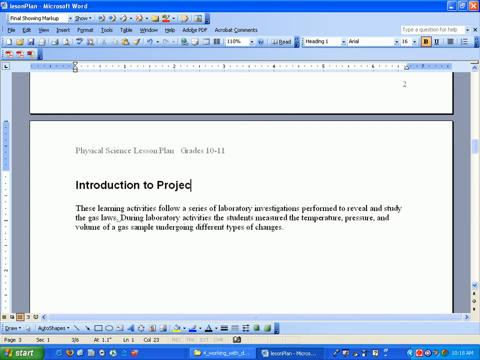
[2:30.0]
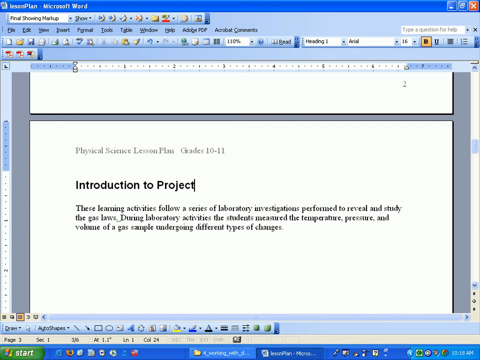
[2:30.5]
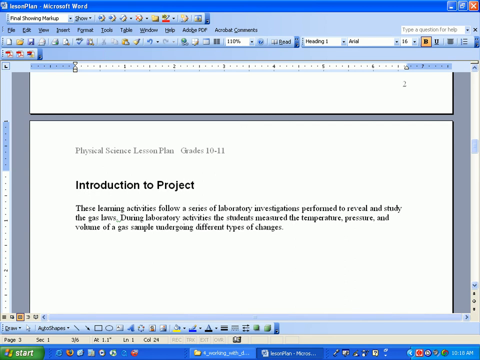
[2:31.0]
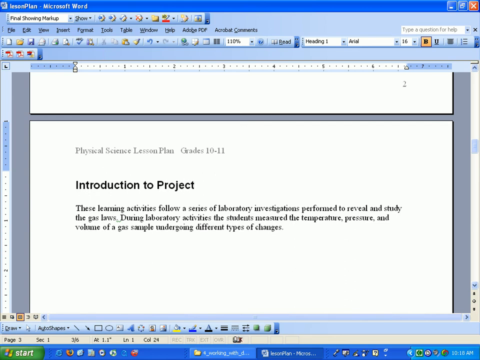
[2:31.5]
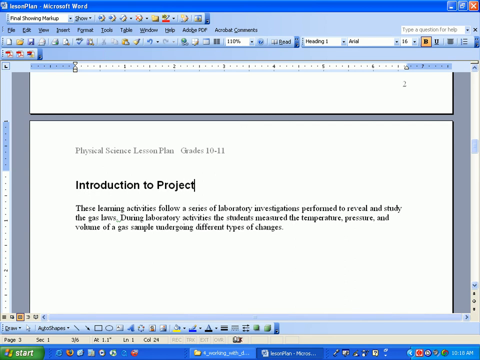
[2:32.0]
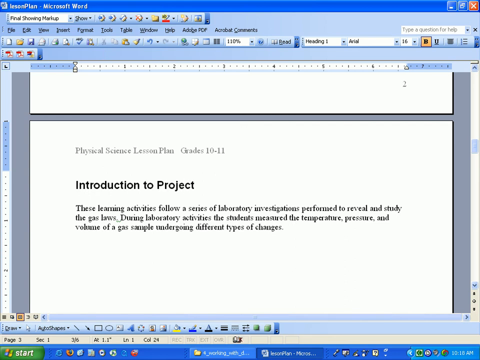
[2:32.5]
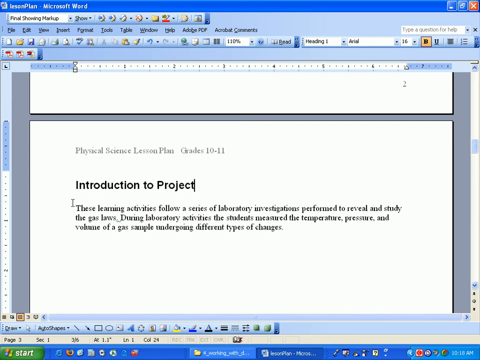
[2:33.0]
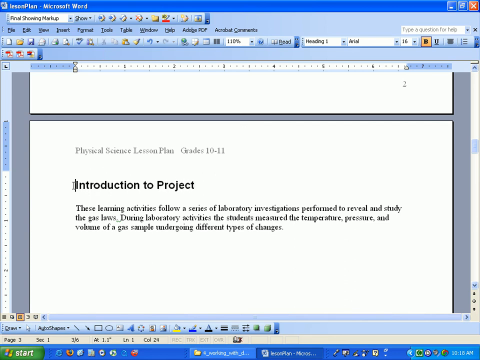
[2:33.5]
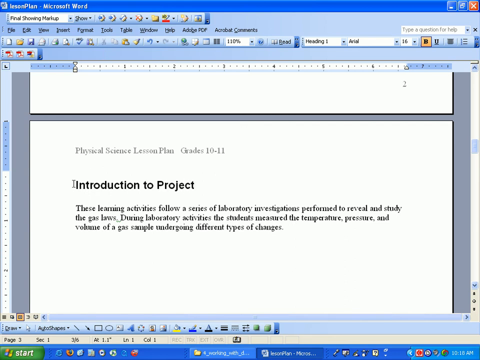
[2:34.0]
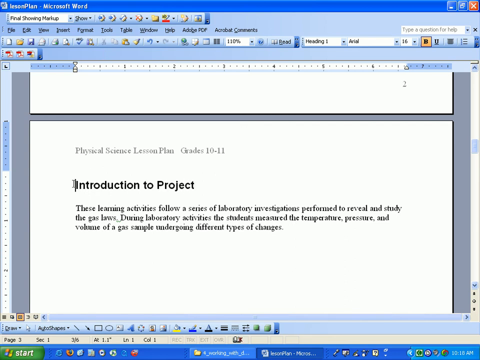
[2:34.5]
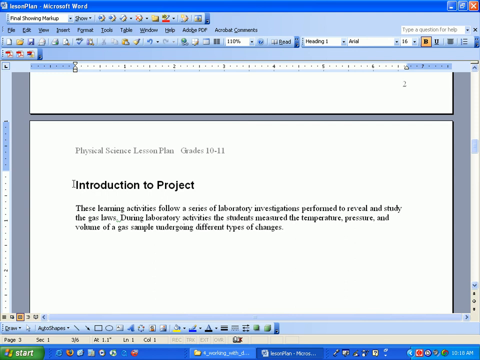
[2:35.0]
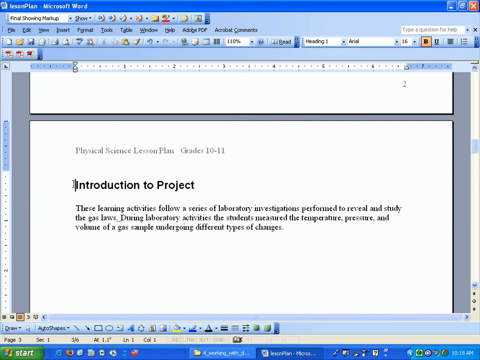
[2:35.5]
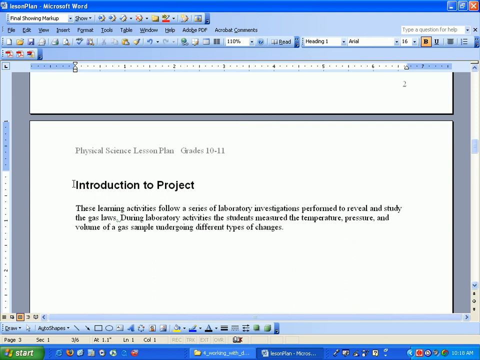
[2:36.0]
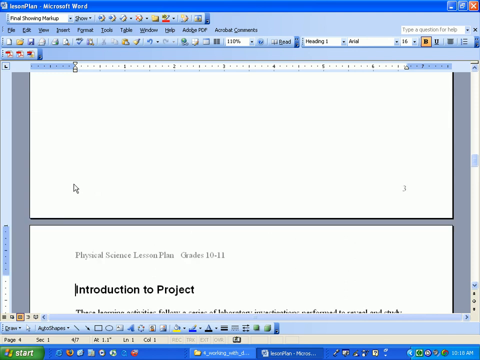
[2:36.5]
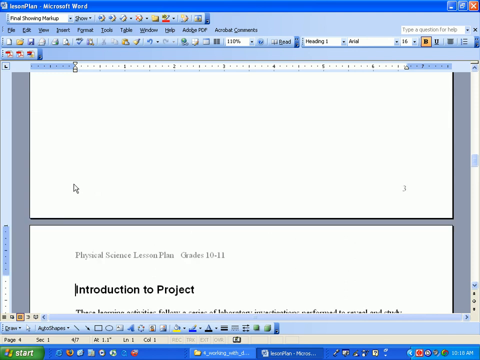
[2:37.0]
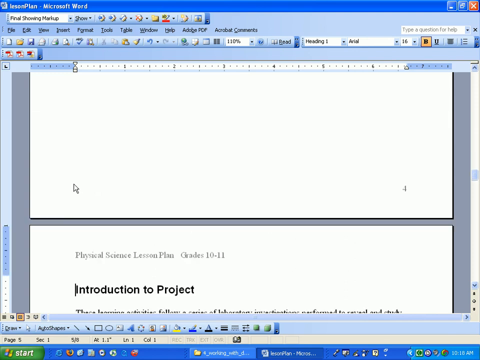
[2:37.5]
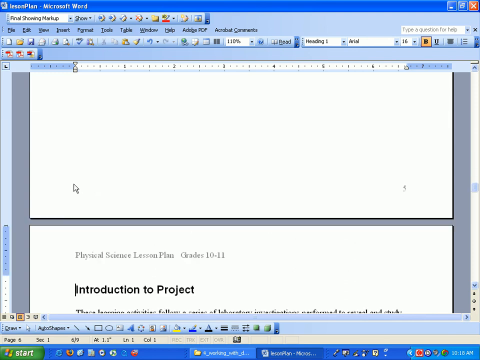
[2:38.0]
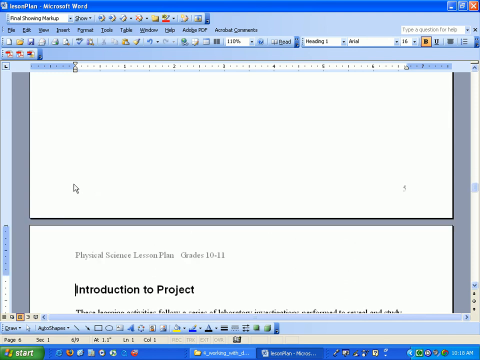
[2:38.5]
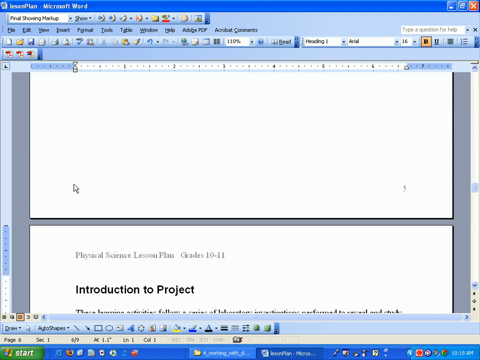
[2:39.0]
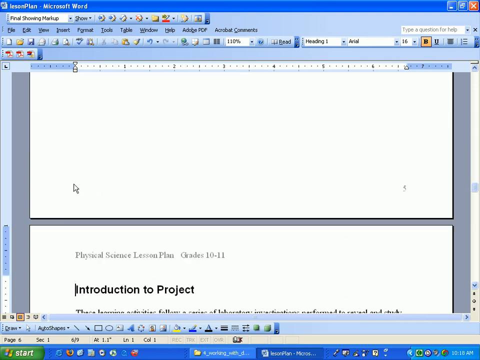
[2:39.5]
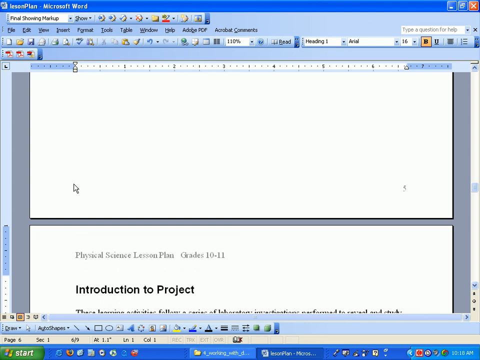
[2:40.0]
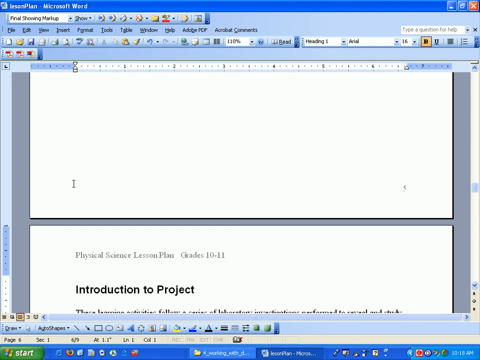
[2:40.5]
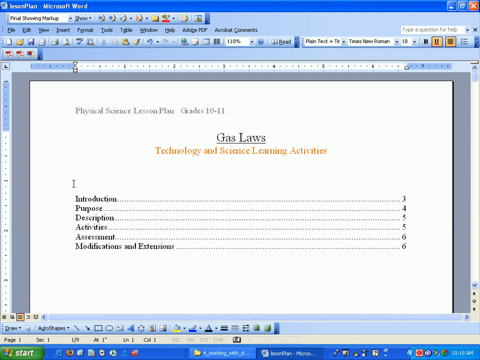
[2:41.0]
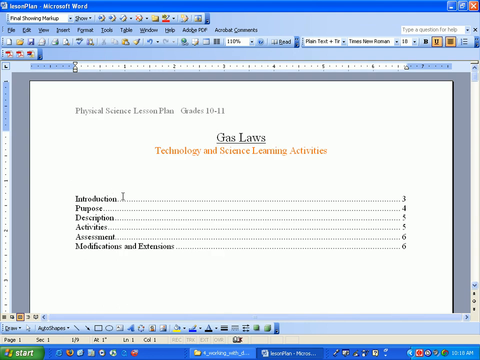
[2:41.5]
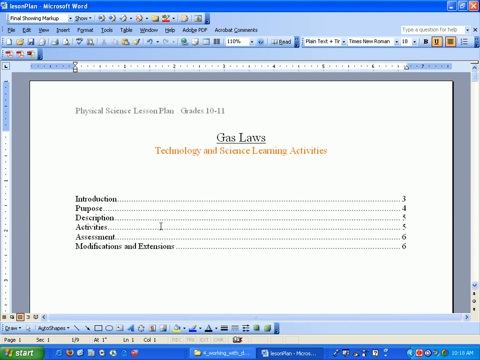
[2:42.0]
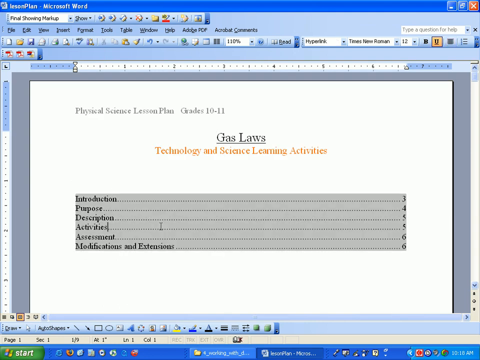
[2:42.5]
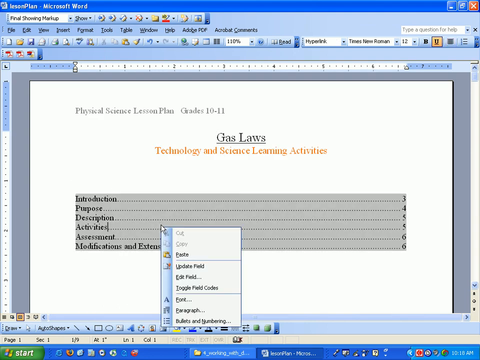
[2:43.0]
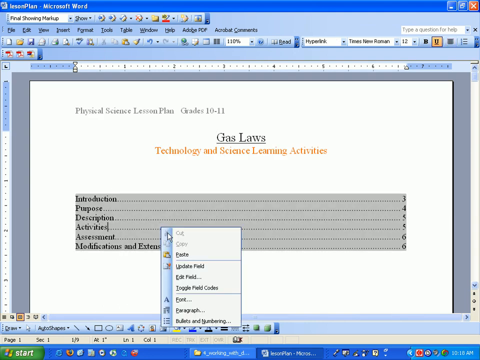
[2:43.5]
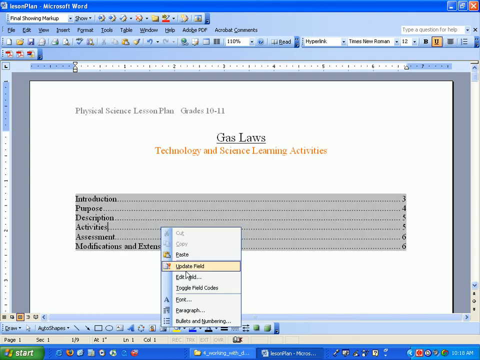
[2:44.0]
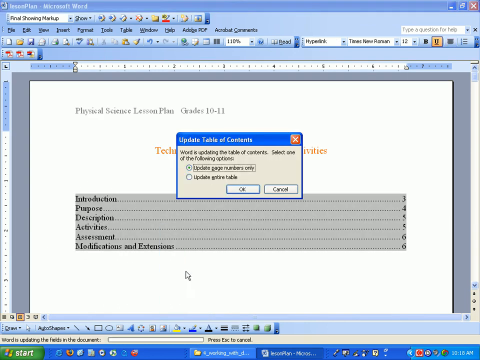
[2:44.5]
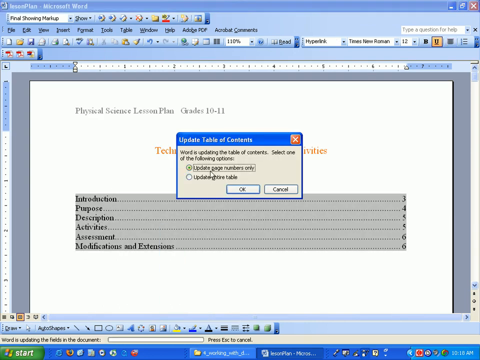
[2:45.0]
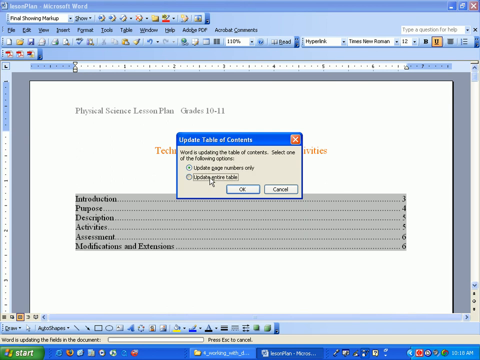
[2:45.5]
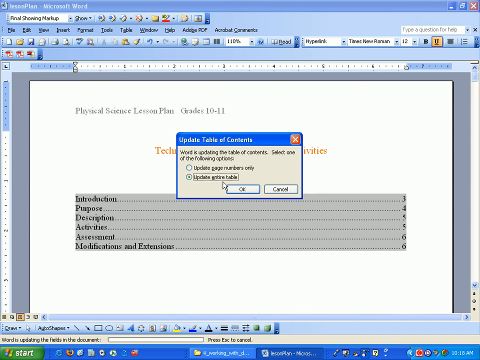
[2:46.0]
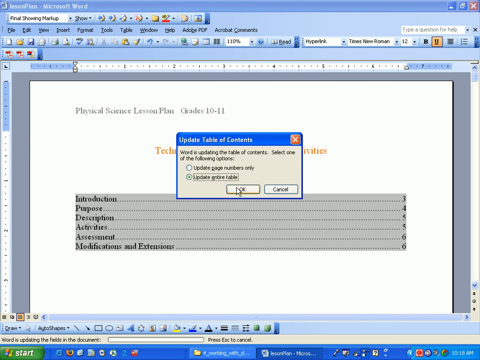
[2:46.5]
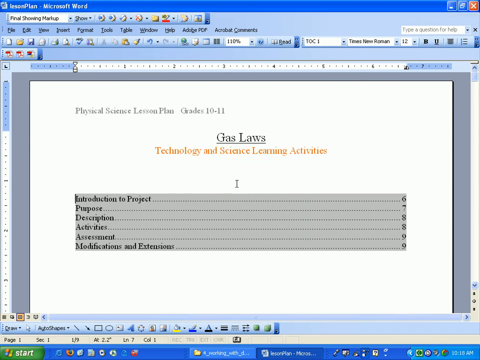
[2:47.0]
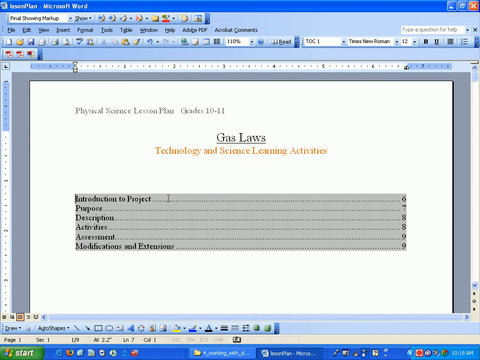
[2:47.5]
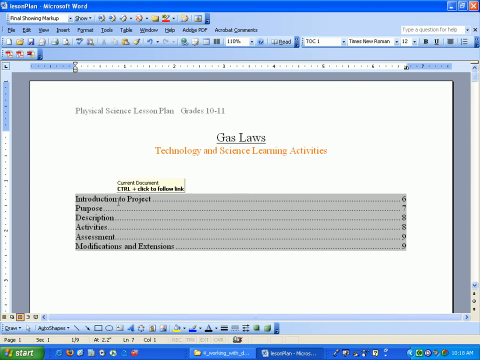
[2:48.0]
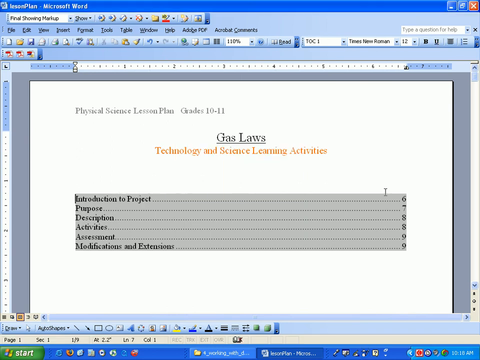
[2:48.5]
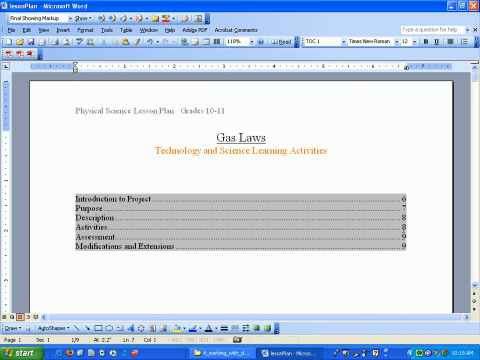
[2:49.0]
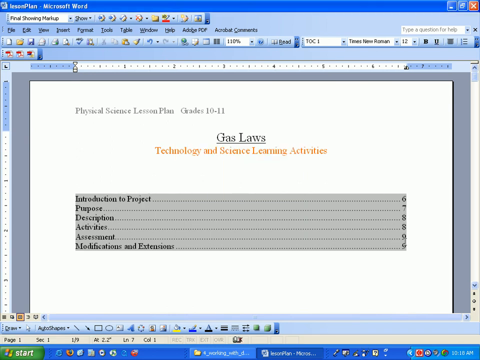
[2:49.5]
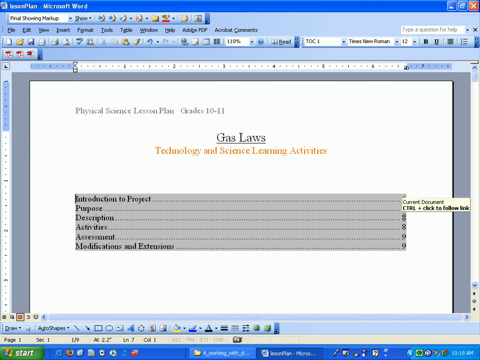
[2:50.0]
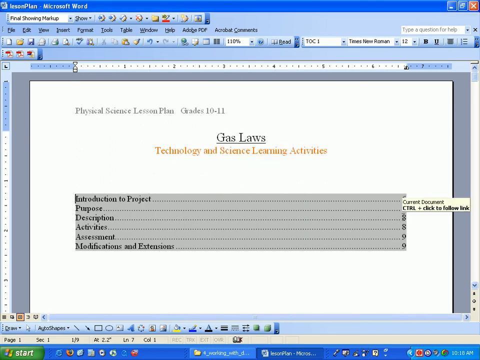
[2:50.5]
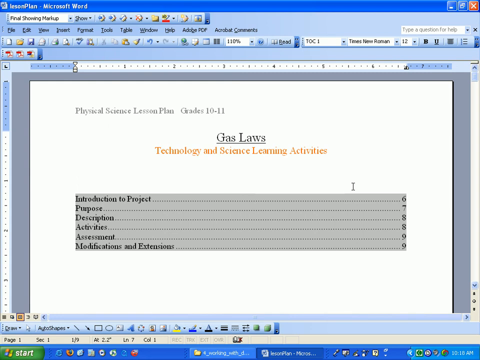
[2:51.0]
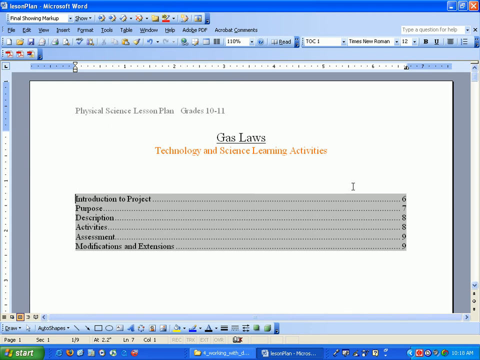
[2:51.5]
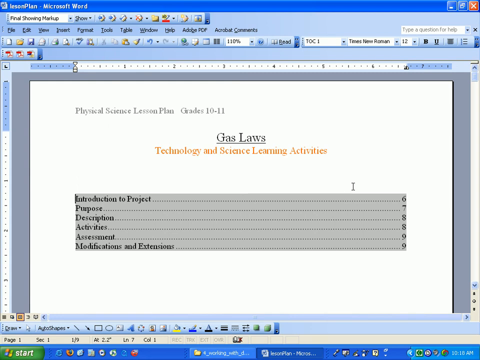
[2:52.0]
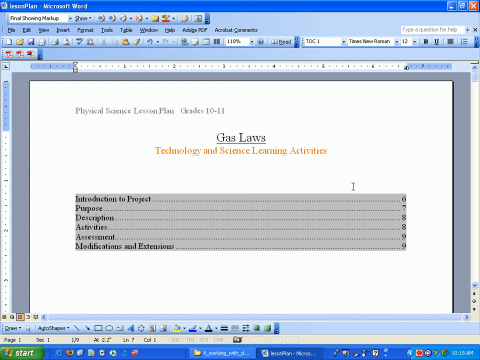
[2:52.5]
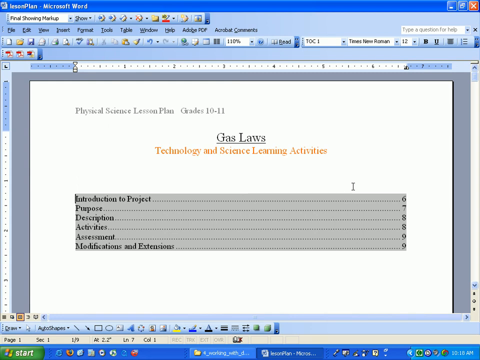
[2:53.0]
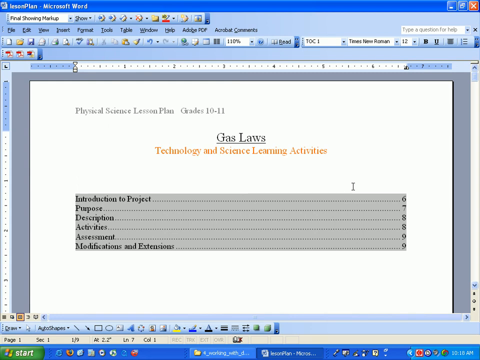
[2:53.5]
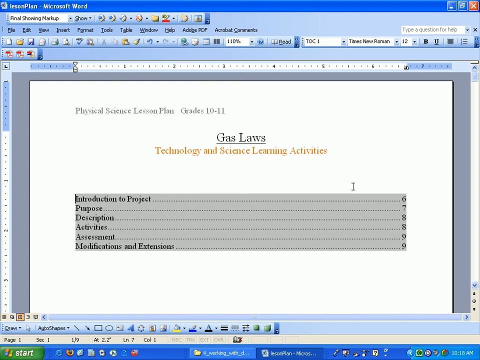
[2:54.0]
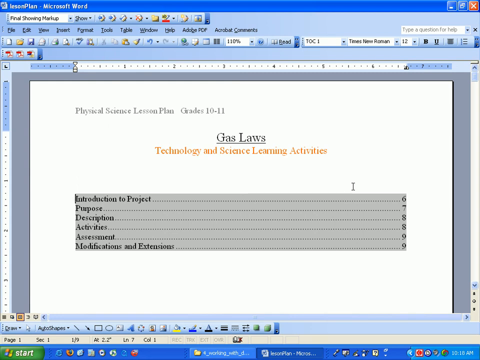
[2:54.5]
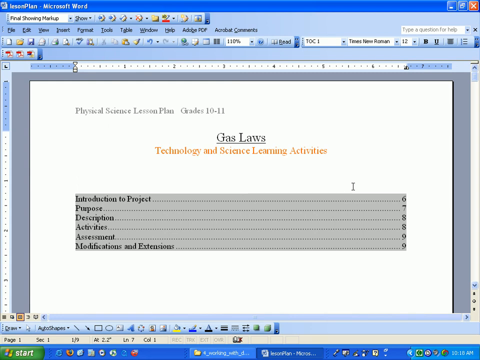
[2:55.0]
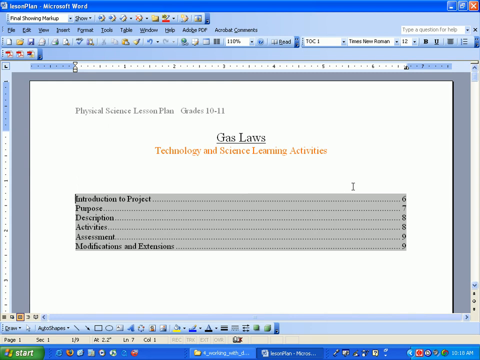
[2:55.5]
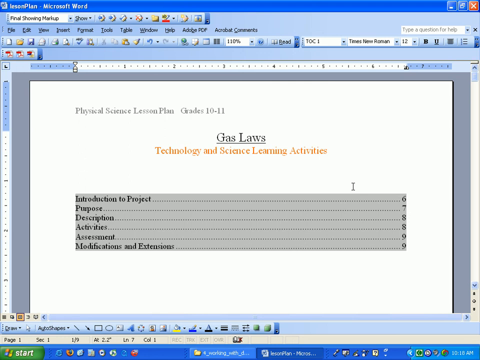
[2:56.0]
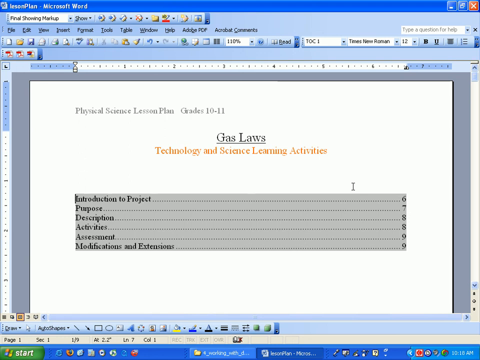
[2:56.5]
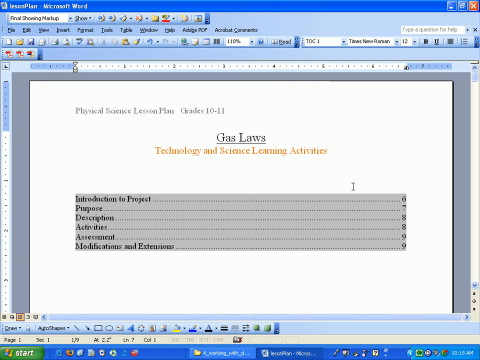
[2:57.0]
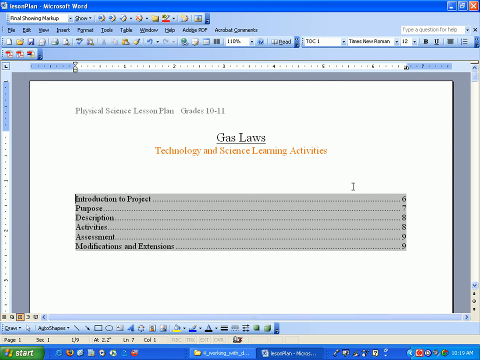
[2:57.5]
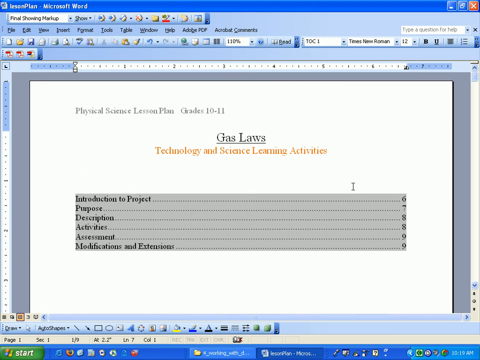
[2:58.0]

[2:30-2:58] The person is fixing the book or paper they have been writing, which seems to be a book or pamphlet.